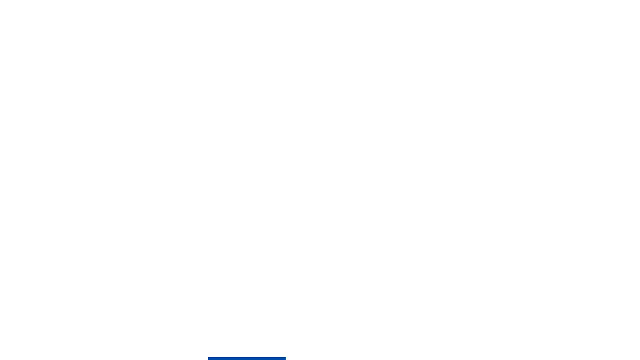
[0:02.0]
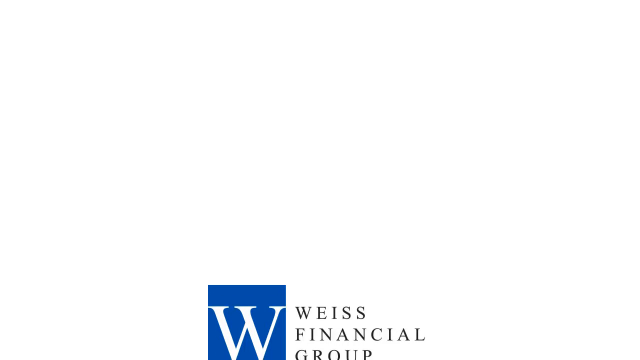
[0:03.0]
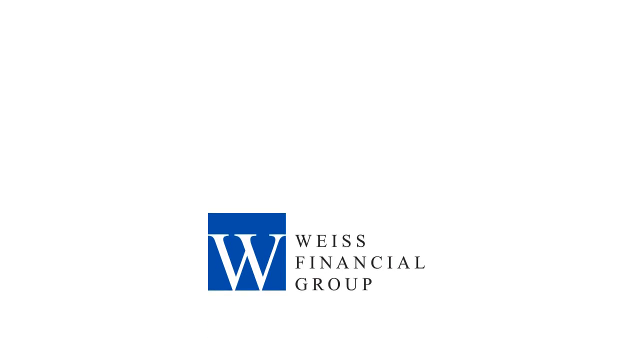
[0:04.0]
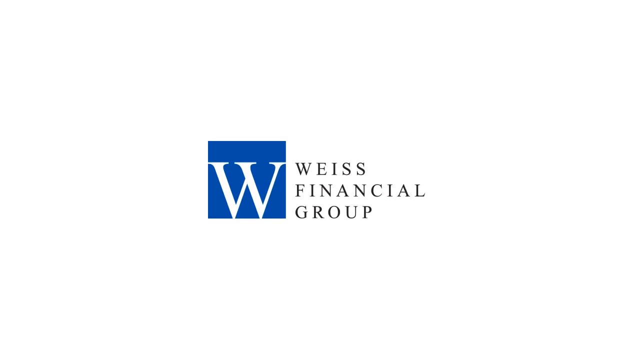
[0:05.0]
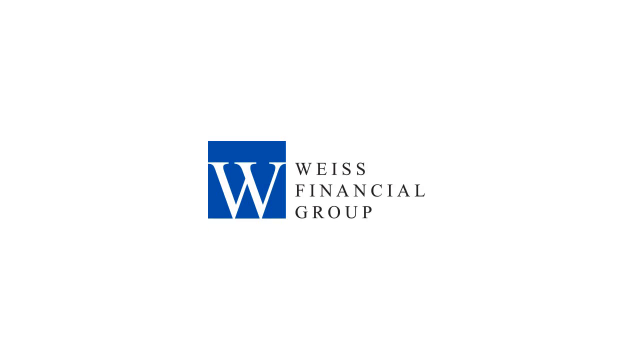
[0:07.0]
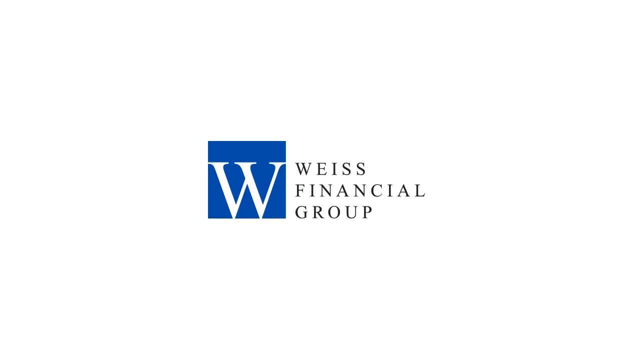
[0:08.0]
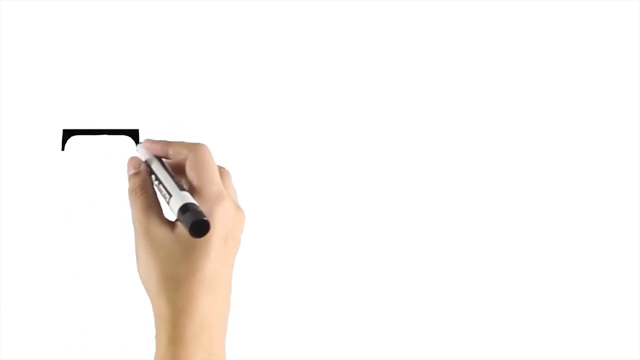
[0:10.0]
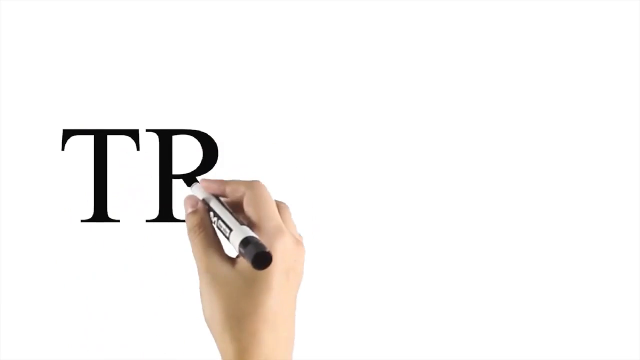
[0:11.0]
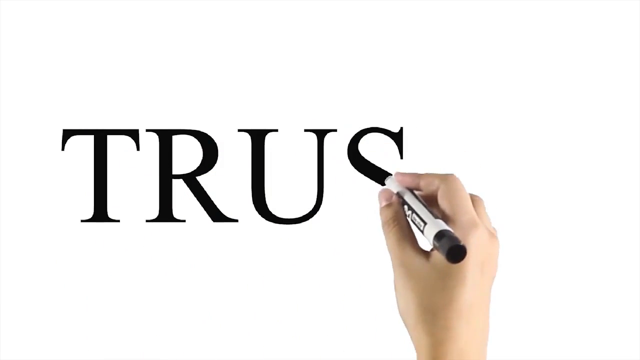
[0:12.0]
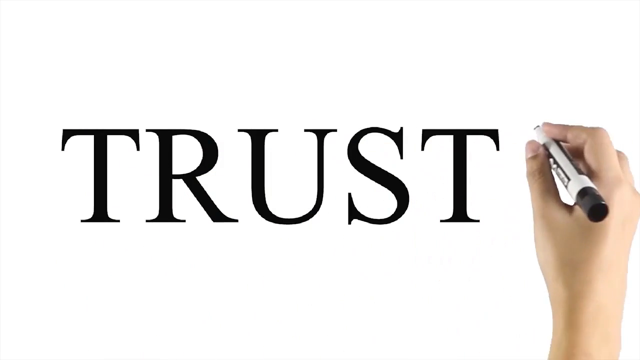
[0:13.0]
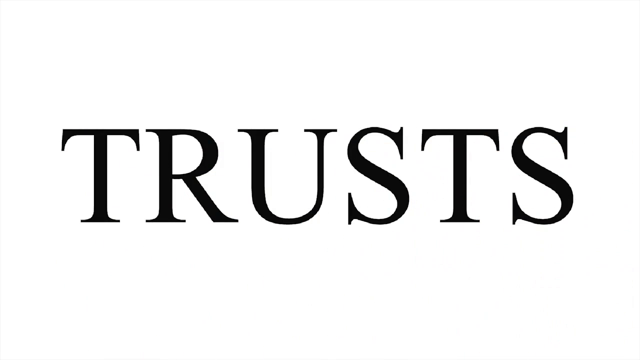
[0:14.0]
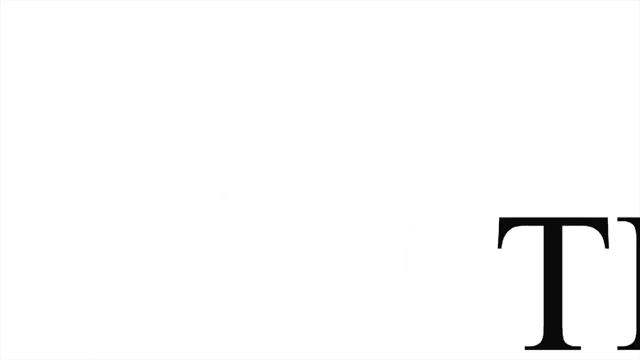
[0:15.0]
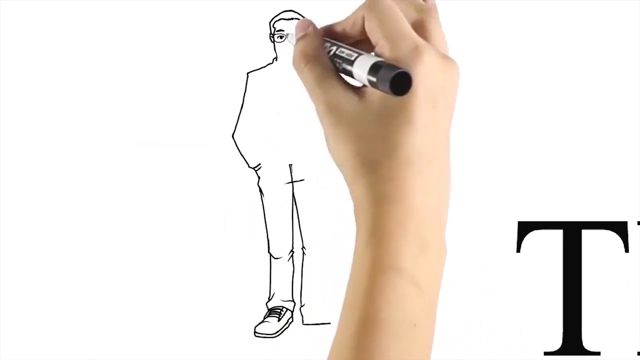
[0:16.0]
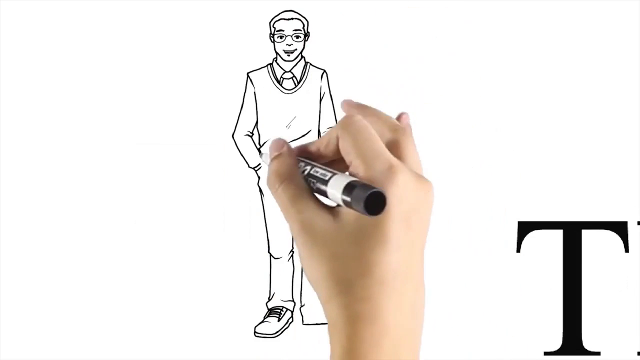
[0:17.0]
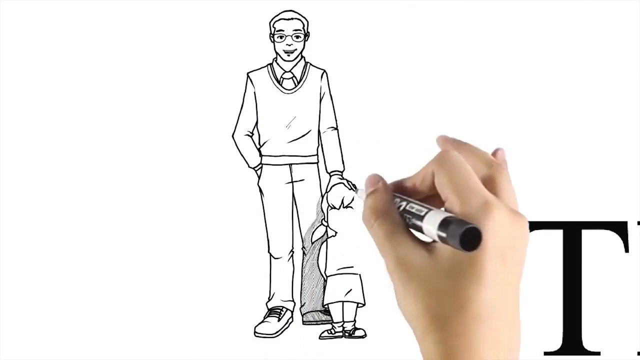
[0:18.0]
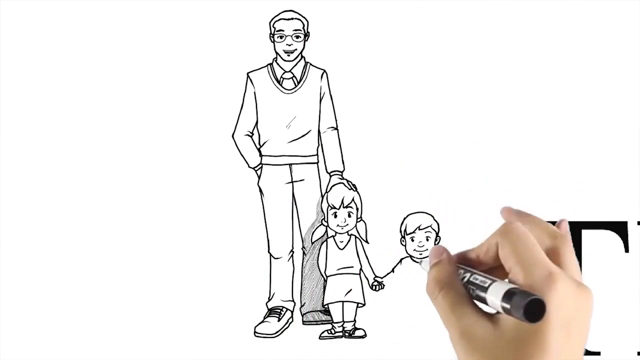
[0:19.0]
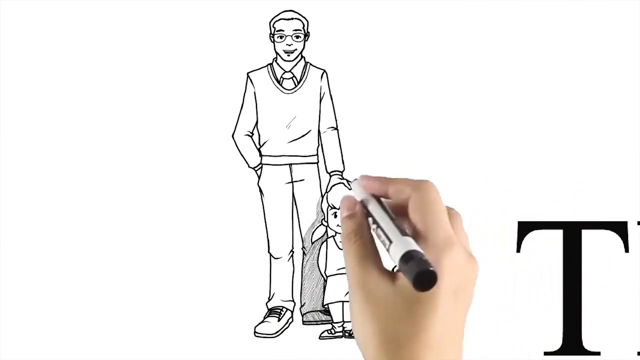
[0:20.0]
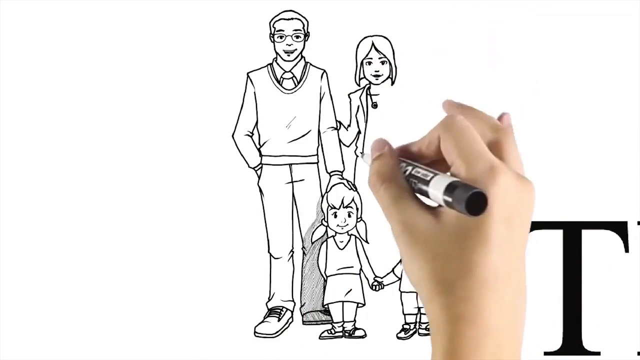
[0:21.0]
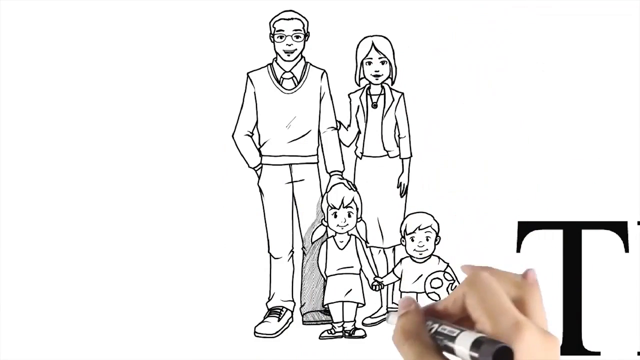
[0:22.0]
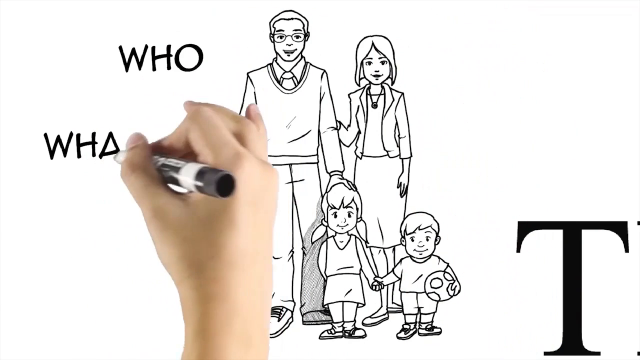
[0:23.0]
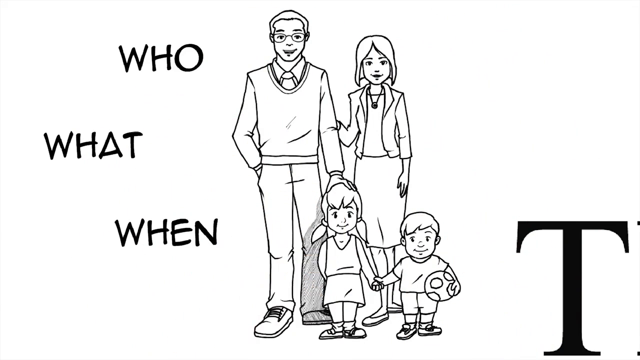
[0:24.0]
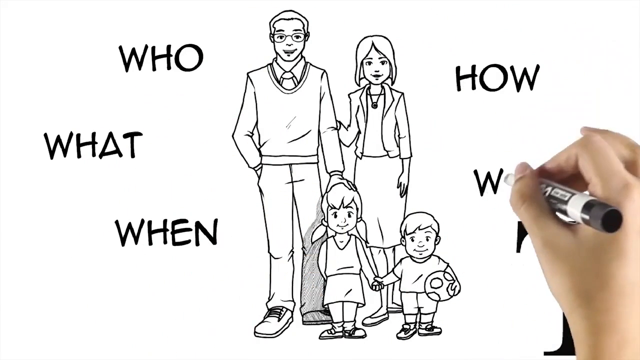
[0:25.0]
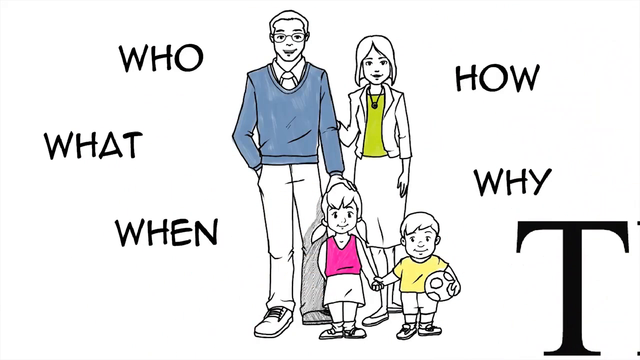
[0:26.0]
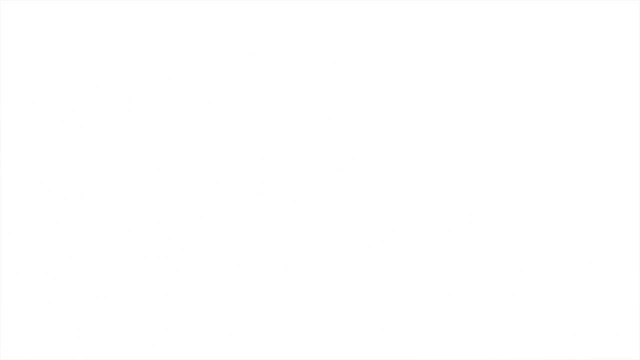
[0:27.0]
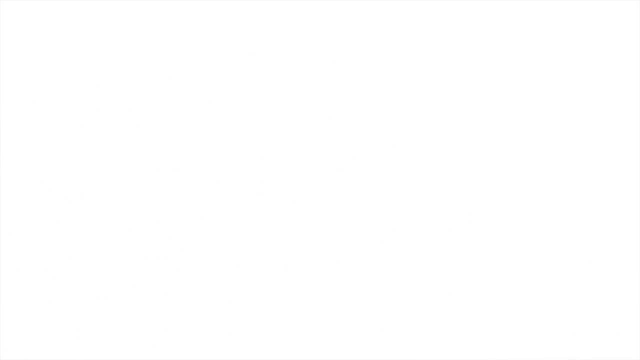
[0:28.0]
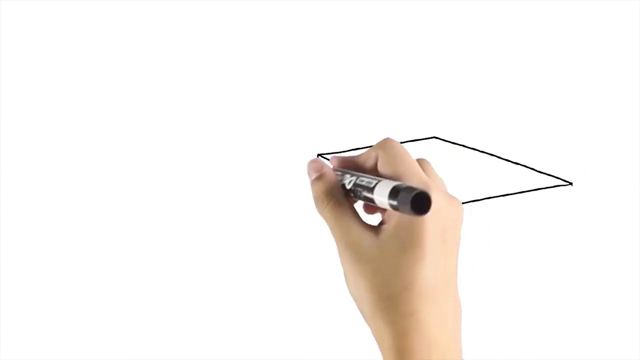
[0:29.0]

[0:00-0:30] The screen is white at first, then a logo rises from the bottom to the middle: a blue square containing a white W, which touches the bottom of the square but not the top. To the right of it is "WEIS" in capital letters, beneath that "Financial" in capital black text, and under that "Group", also in capital black text. The logo is in the centre of the screen. It then disappears completely, and a right hand holding a pen pinched between the thumb and first finger starts writing letters: a capital T, R, U, S, T and S. The word slides off to the right, and the hand draws a line drawing of a man with his hand on the head of a small girl, who is holding hands with a small boy. A woman is to the right of the man, clutching his elbow with her right hand, and they are all smiling. To the left, the pen writes "who, what, when" in black capital letters, and "how, why" to the right. Colours are added to the line drawing of the people, who then disappear off to the bottom left corner. The pen continues drawing lines, starting with a square box.